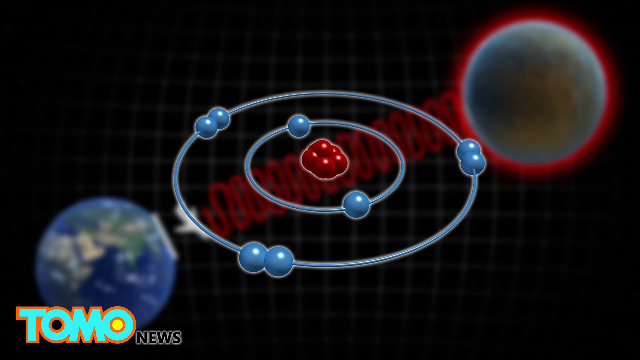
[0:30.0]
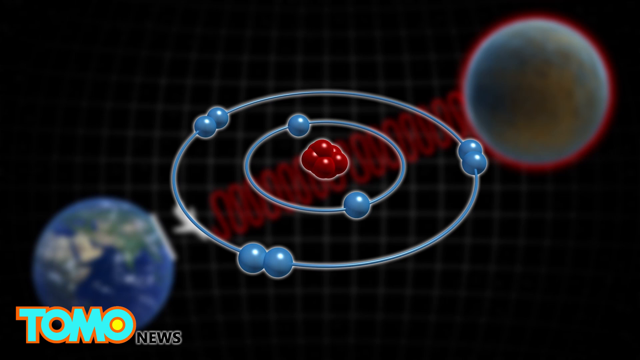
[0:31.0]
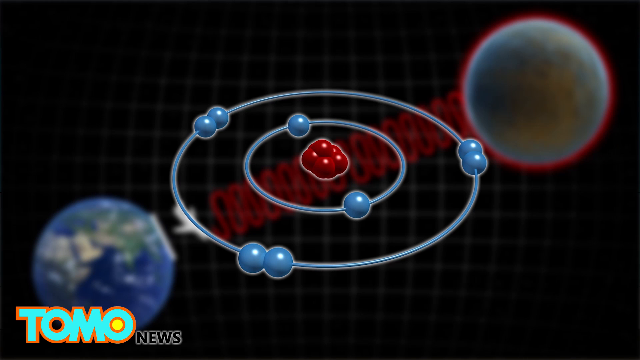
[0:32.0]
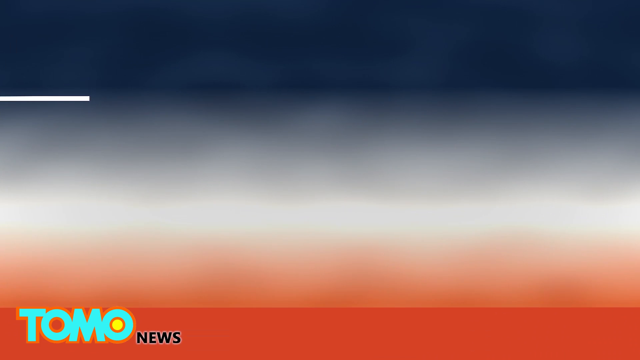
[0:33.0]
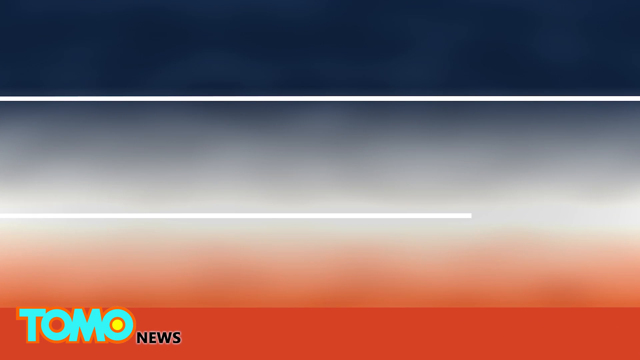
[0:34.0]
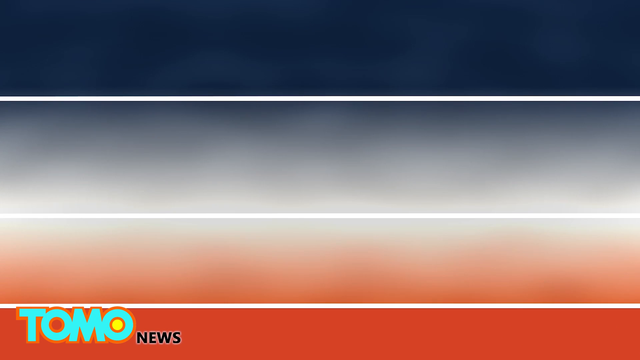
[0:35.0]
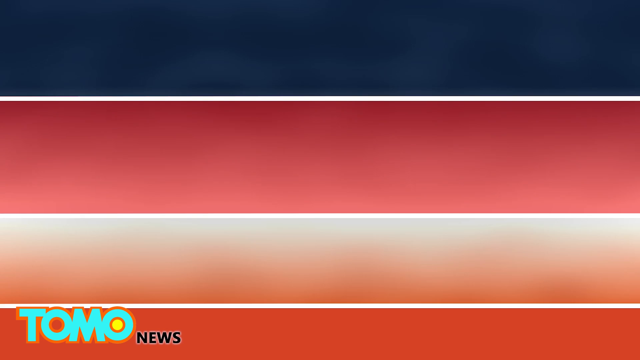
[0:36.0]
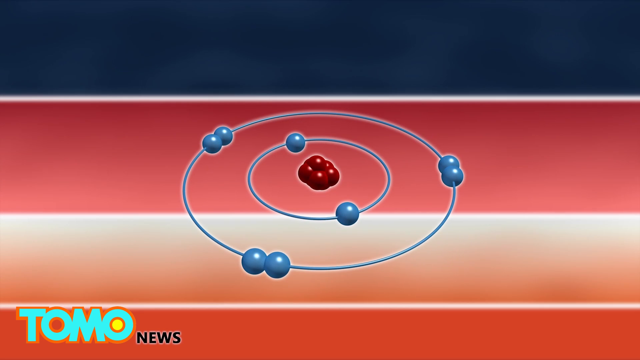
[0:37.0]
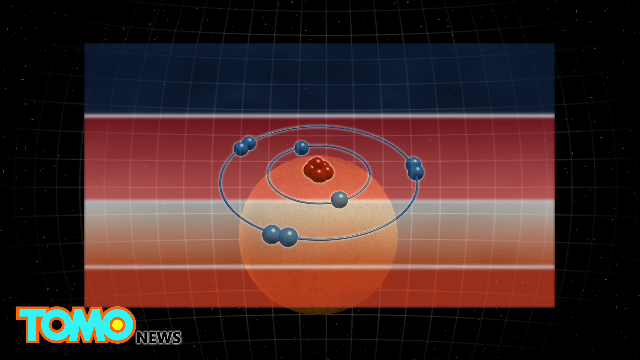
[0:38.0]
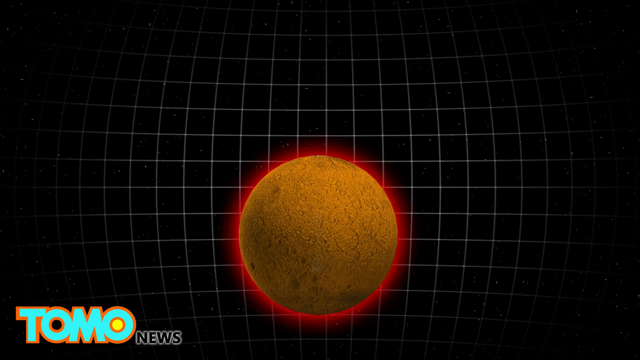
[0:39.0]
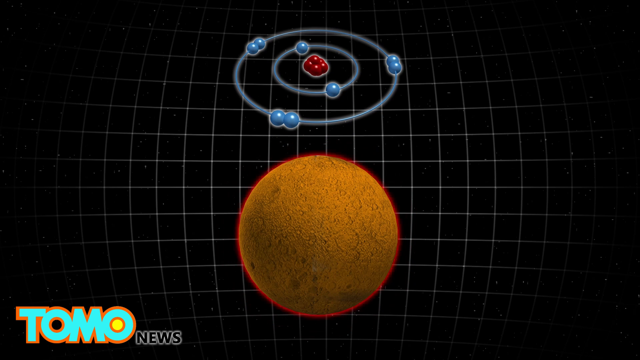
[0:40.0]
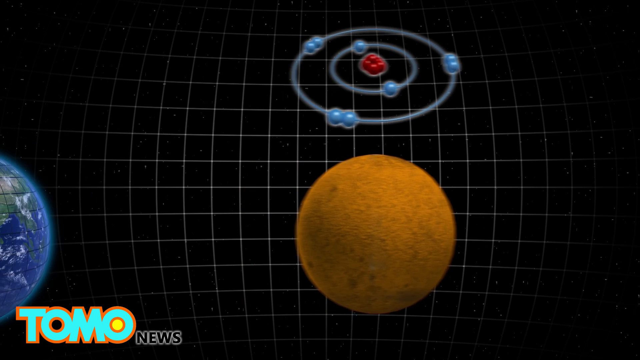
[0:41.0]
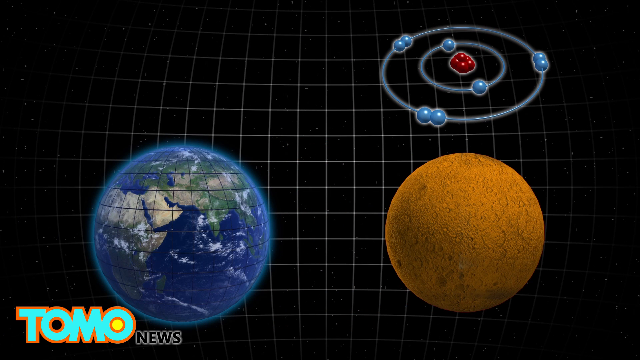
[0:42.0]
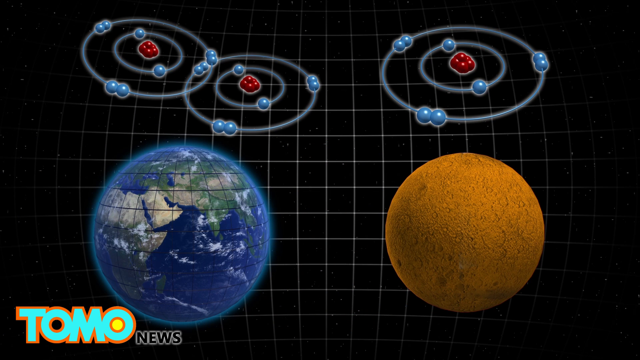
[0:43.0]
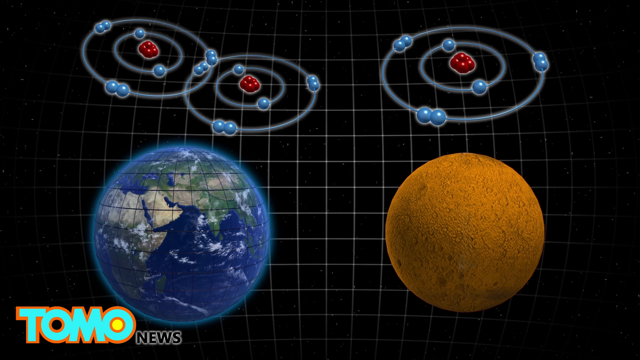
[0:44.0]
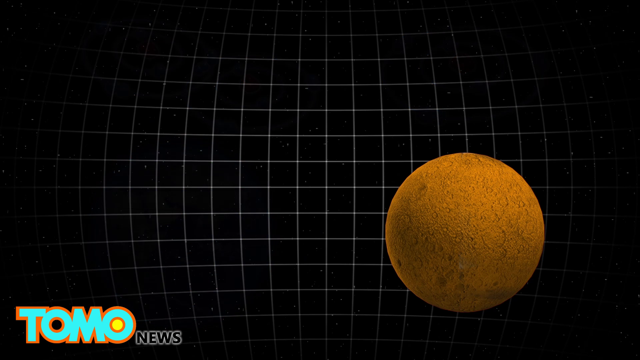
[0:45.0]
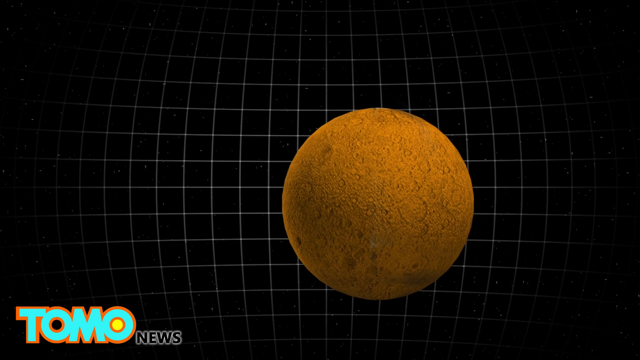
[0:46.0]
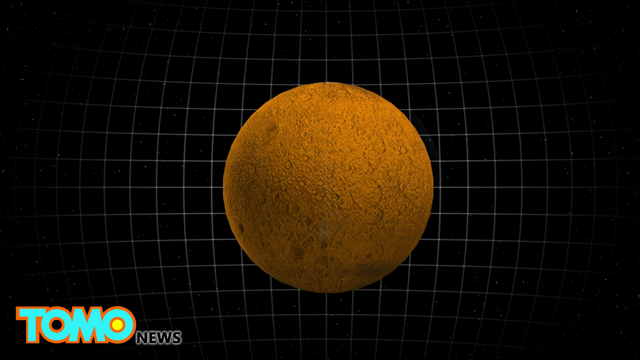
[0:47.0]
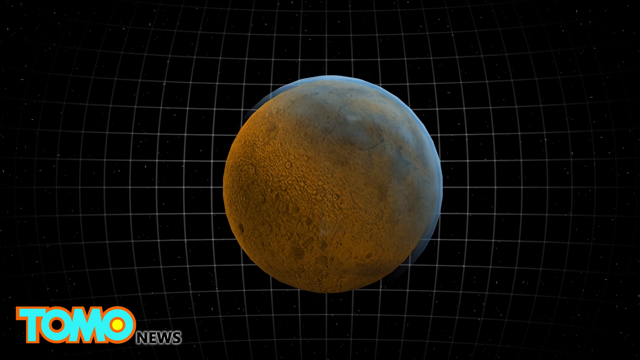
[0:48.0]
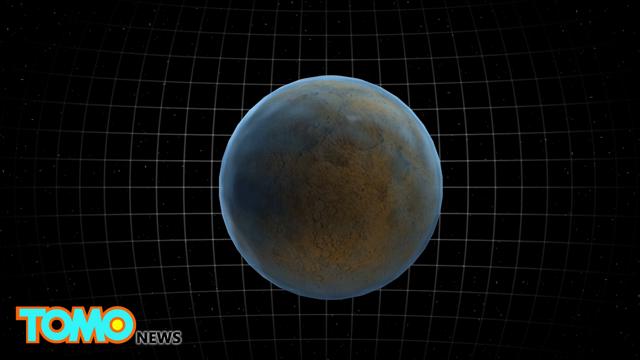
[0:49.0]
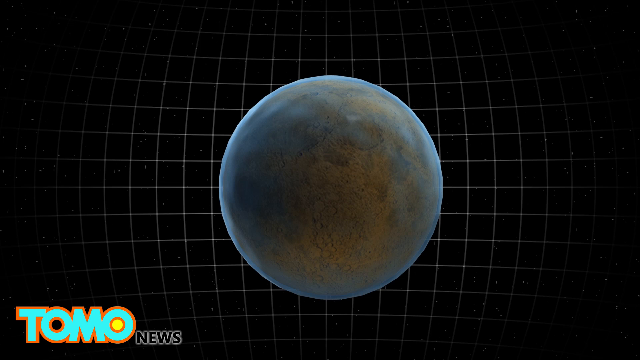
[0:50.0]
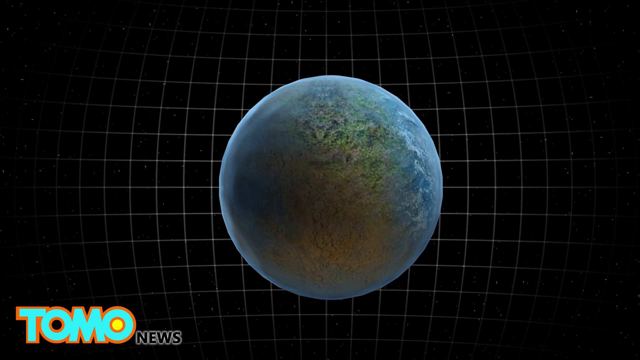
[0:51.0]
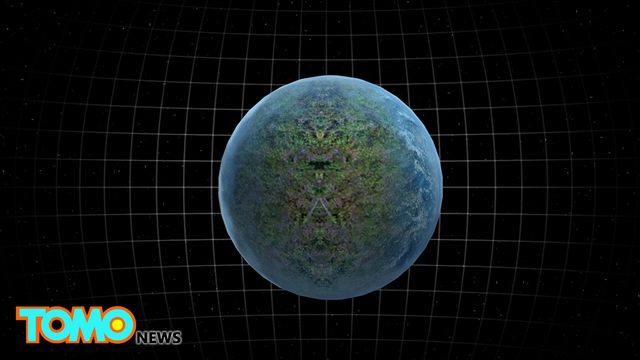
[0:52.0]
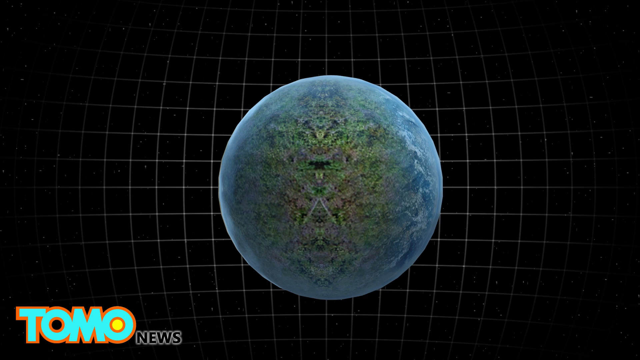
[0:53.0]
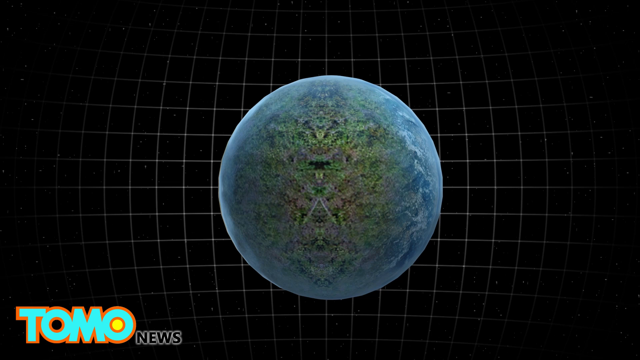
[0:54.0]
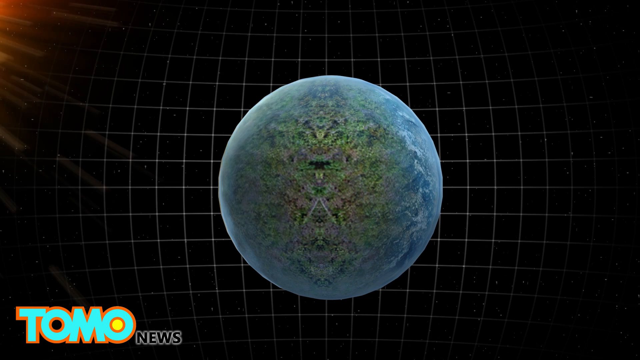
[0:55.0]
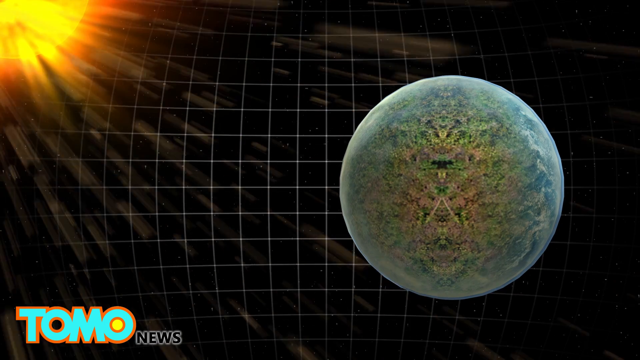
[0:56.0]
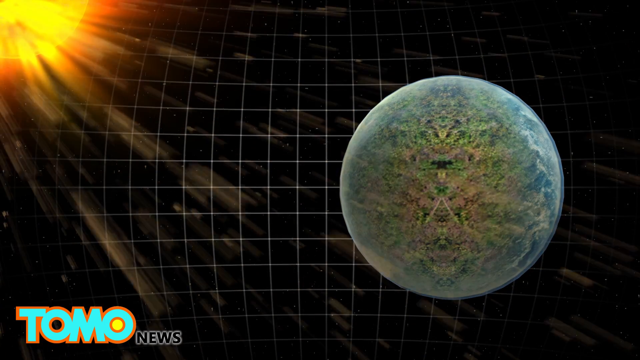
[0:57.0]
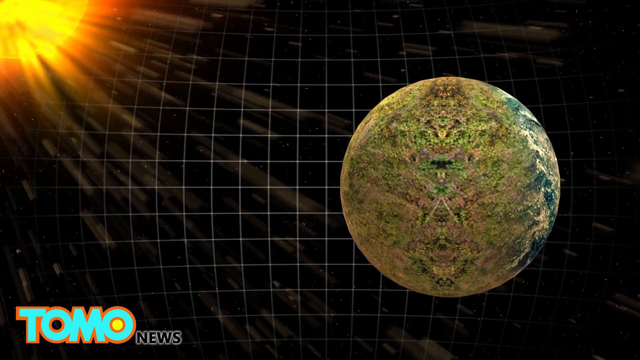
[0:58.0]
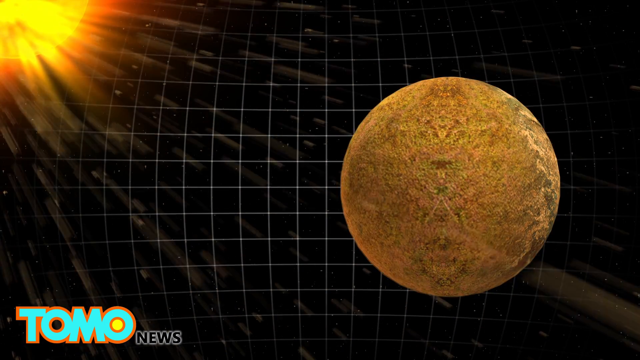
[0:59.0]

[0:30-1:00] A big circle above changes color, shown as a hemisphere. Some rays strike the sphere, and small circles are behind it. An airplane approaches and lands on the ground. Another side of the hemisphere is shown. The screen shows "Tomo News." The airplane moves toward the sphere. The words "NASA finds atomic energy" apparently appear, and NASA is shown in the big sphere. A line runs from left to right, and a red patch appears. A circle with a blue element shows the distance between the two hemispheres, and then there are three. The sphere turns blue, and behind it the sun rises. A plane landing on the land is shown.